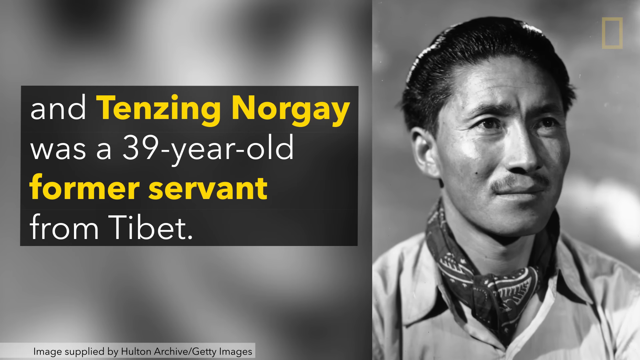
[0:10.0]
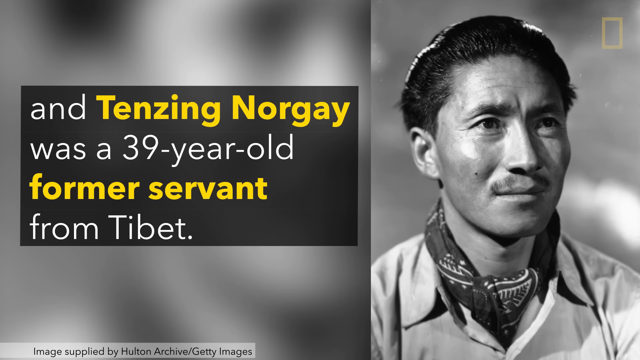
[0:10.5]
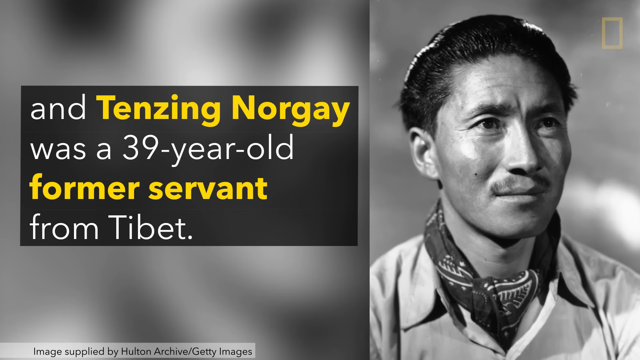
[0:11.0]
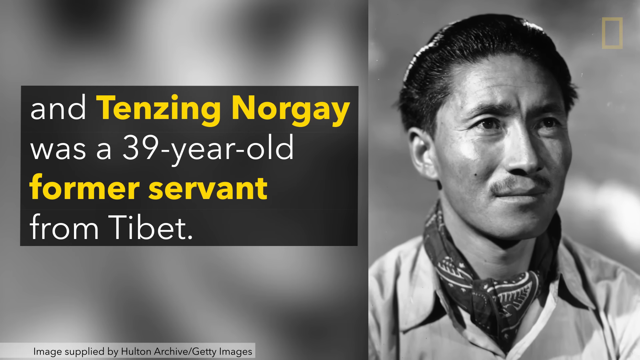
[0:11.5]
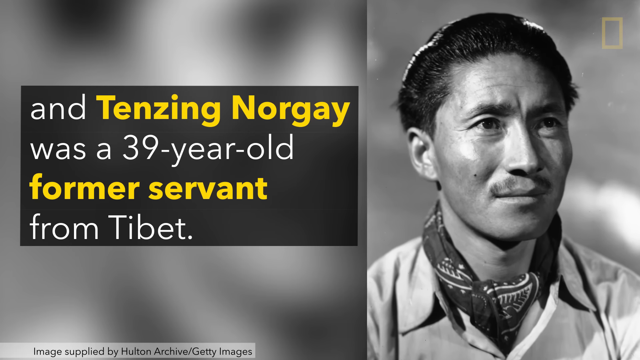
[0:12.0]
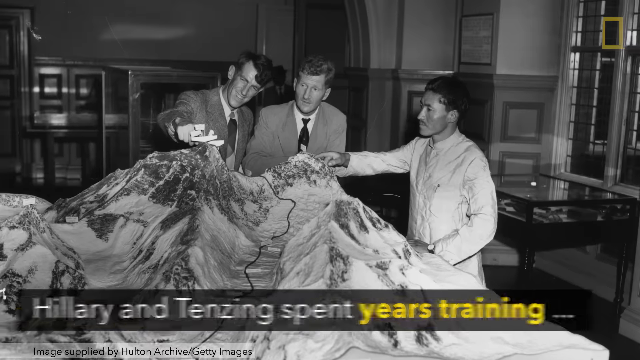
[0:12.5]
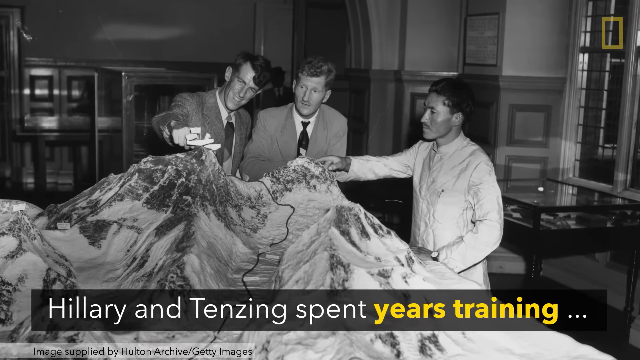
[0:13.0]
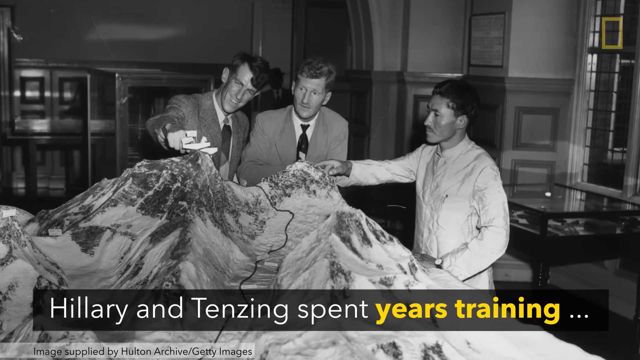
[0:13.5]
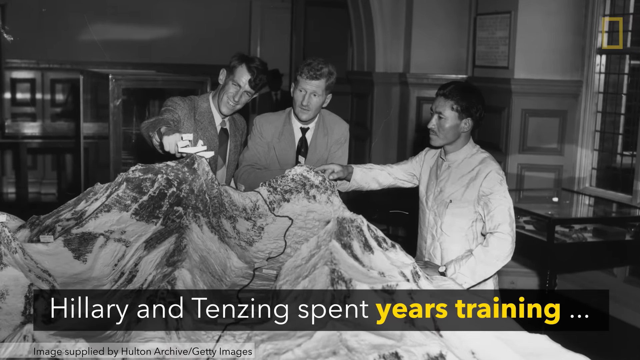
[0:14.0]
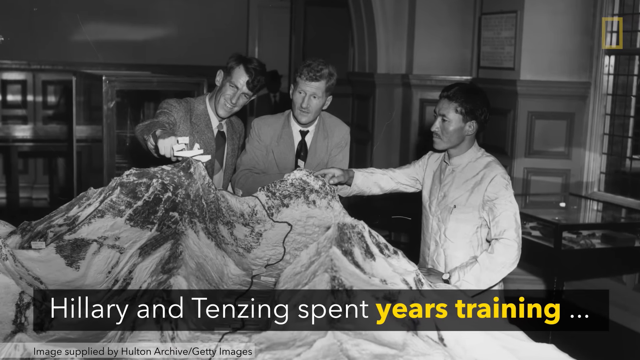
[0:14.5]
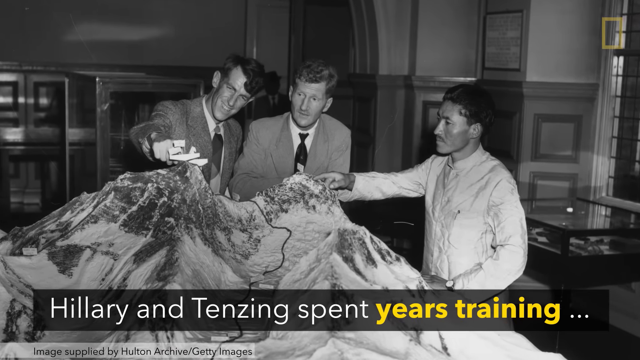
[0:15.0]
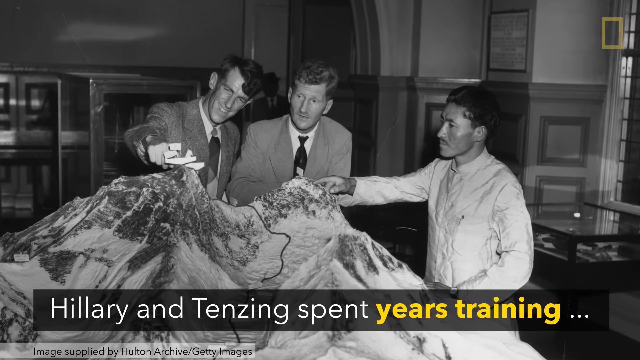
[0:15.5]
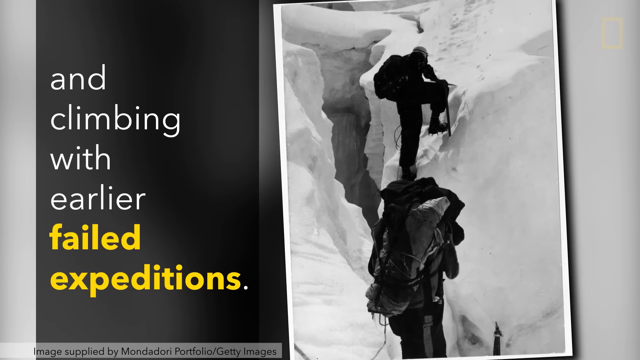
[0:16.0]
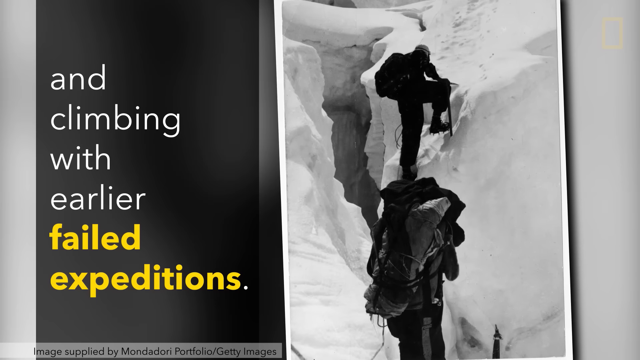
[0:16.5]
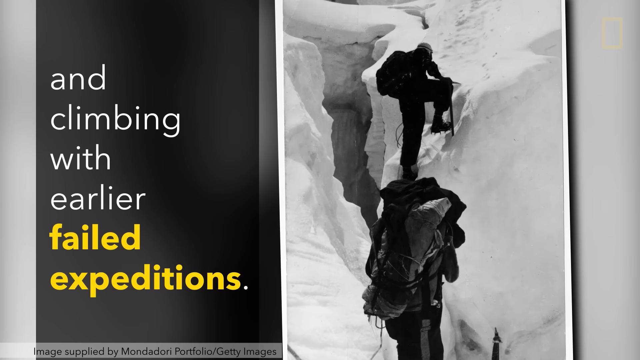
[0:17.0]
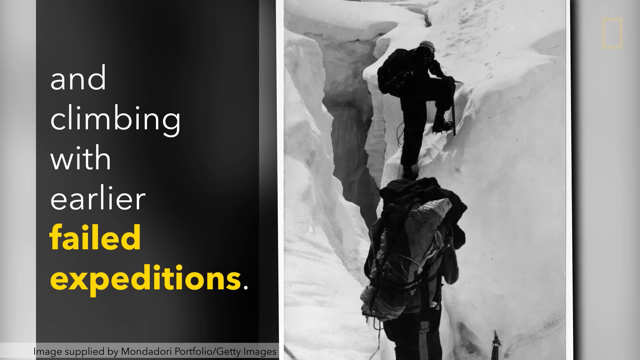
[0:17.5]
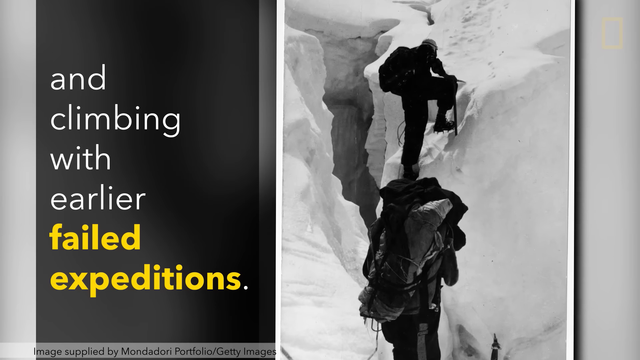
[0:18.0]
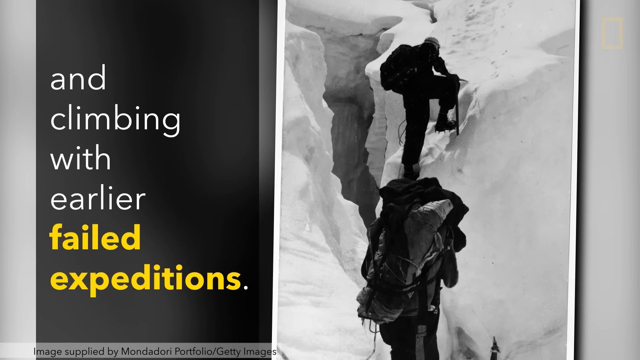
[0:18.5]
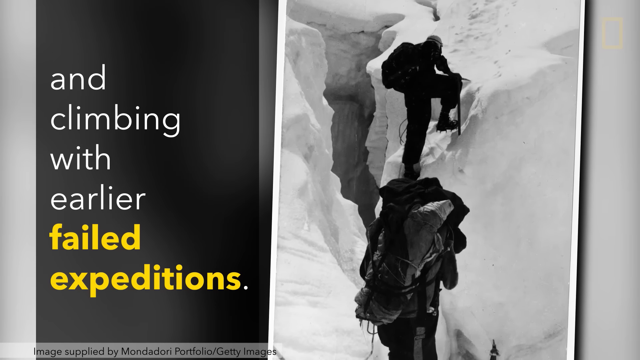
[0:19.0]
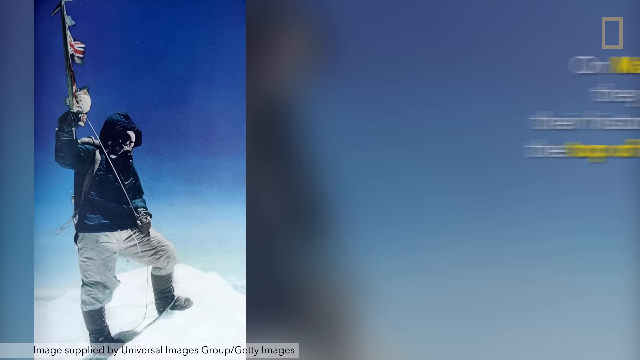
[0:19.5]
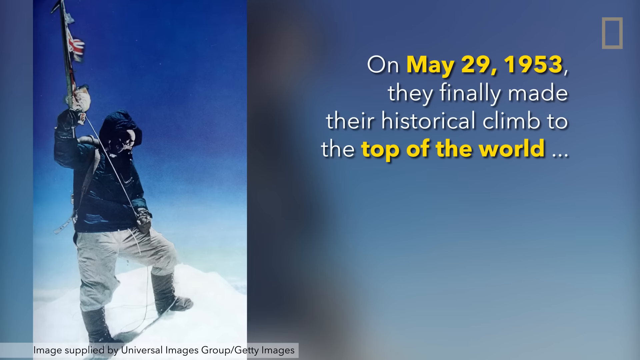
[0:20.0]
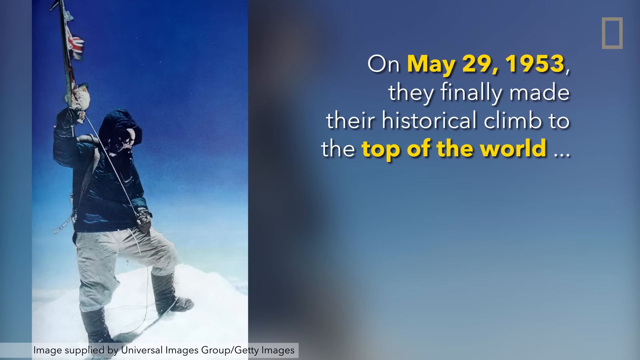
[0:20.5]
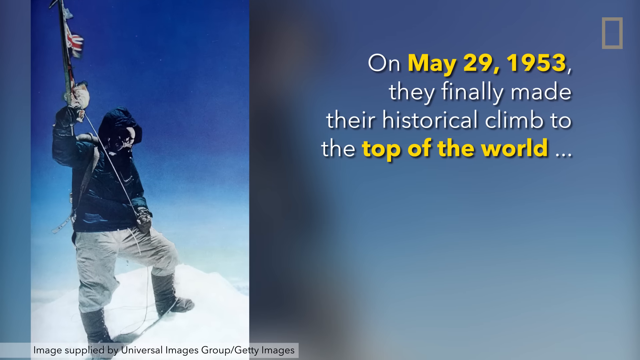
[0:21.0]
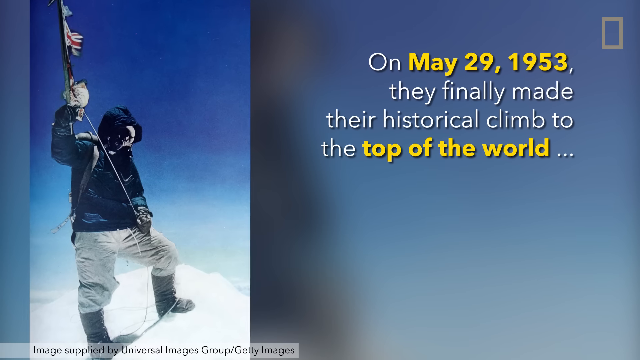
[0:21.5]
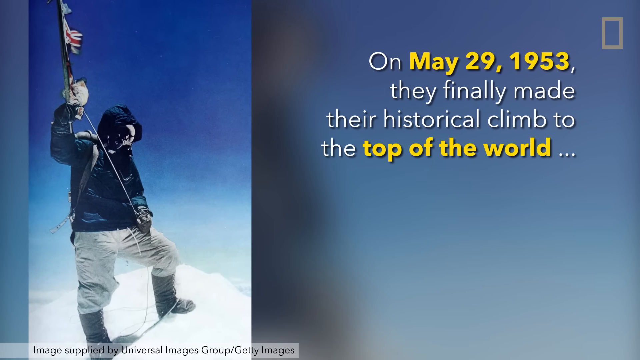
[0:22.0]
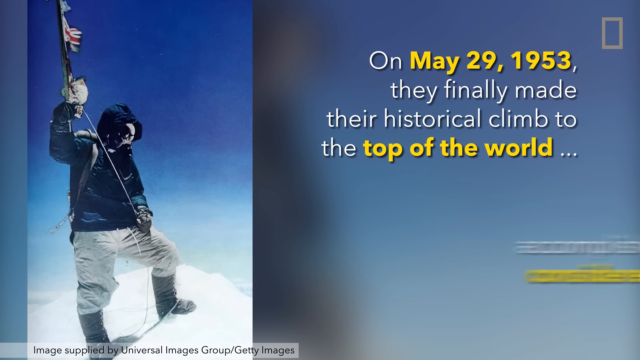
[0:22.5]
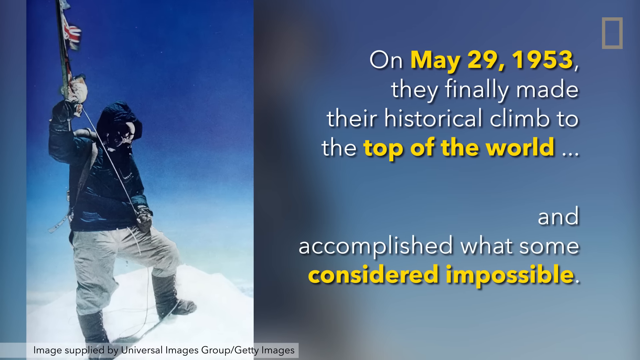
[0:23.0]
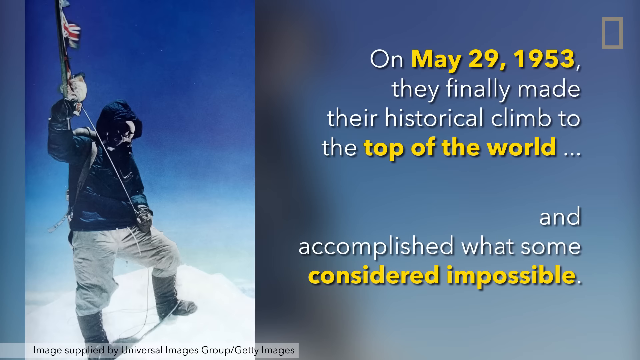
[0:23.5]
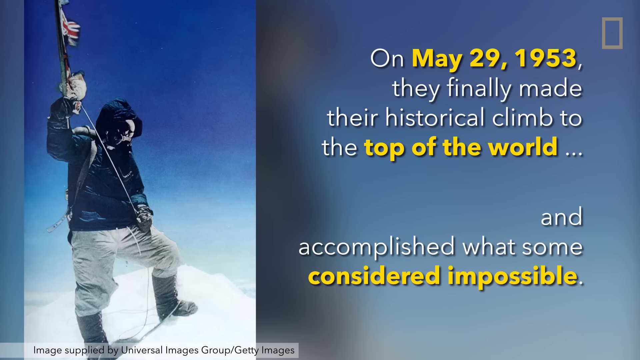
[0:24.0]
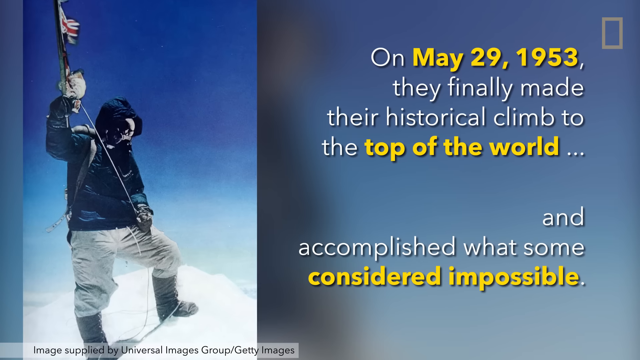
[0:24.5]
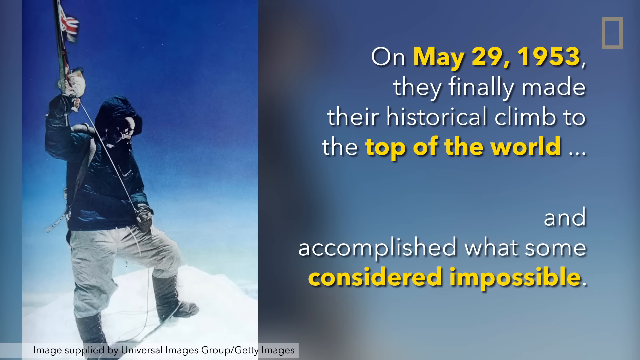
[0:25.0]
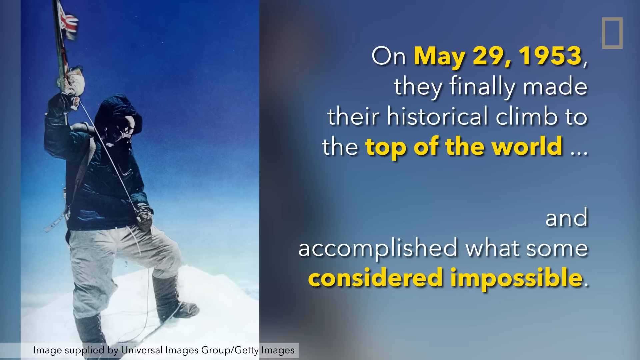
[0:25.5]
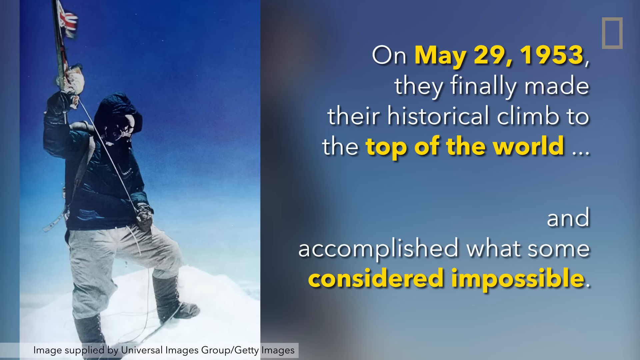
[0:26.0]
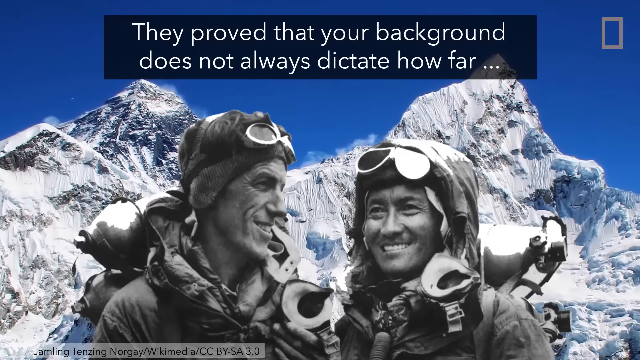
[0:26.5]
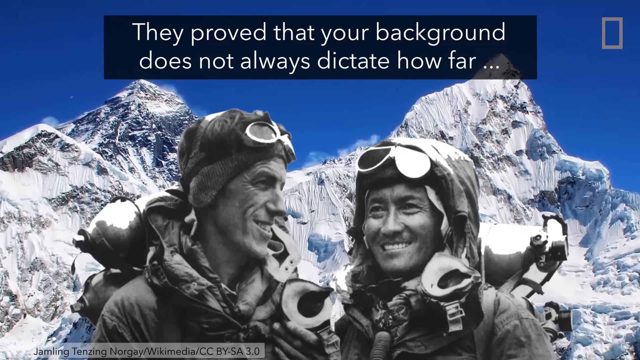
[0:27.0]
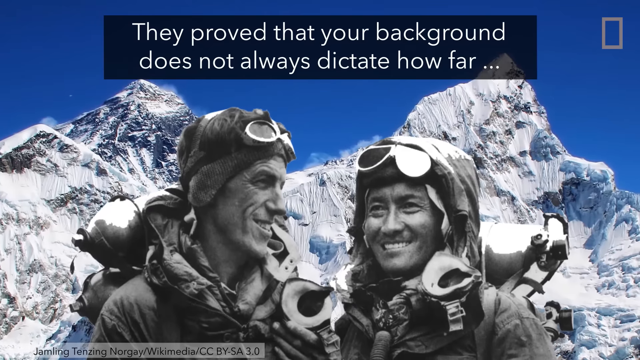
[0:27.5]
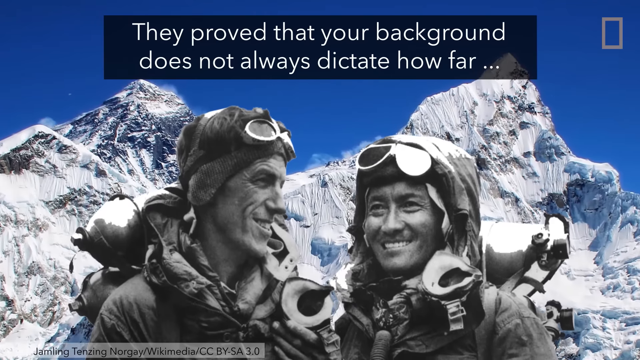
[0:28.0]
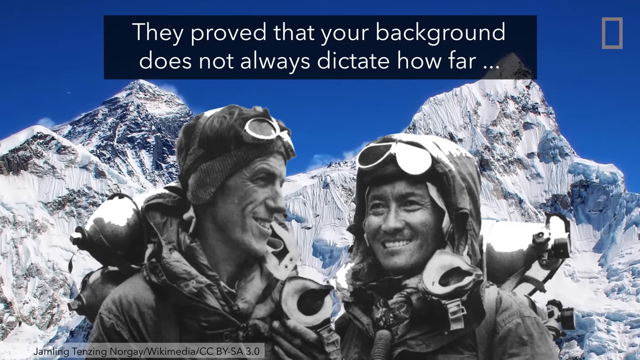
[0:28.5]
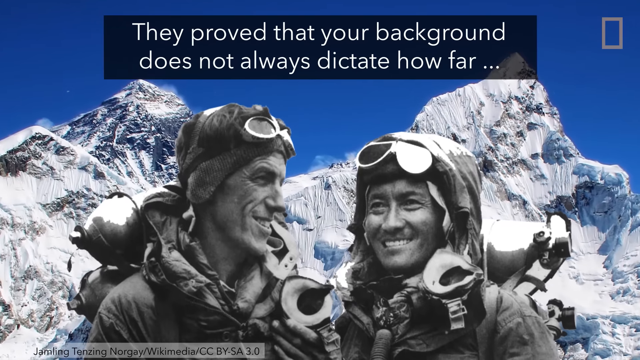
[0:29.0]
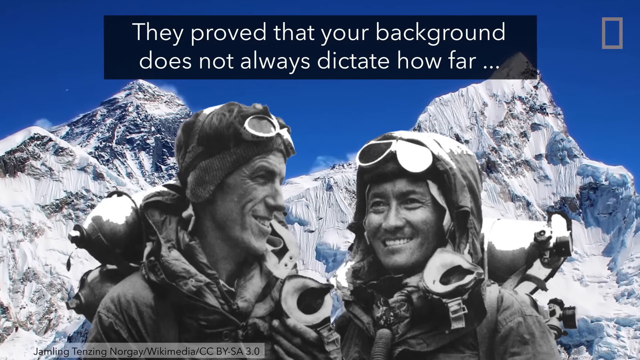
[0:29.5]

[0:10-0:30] A black-and-white photograph of a man is on the right-hand side of the screen; he has a neck scarf tied around his neck. On the left-hand side, a text box in white and yellow font reads "and Tenzing Norgay was a 39 year old servant from Tibet." The image changes to a big hall with a model of the Mount Everest range in the middle of the room. Three men, two wearing suits and one wearing a white overall, are all looking at the model and pointing at it. The screen then changes to a kind of very basic hand drawing of two people climbing Mount Everest, with the words "and climbing with earlier failed expeditions." Next, on the left-hand side, a photographic image shows a man dressed in full snow gear who appears to be on the very peak of Mount Everest. He holds a British flag in his right hand and looks like he is about to stick it into the ground. On the right-hand side, text states that on May 29th, 1953, they finally made their historical climb to the top of the world and accomplished what some considered impossible.